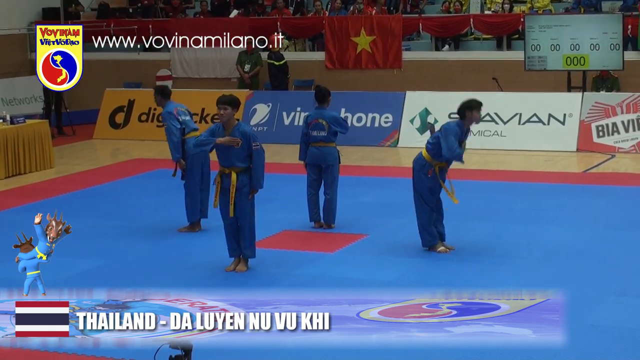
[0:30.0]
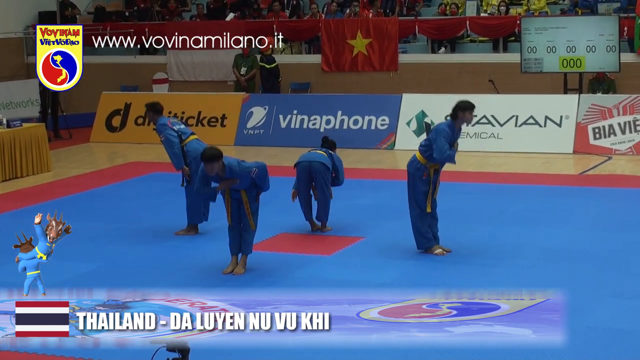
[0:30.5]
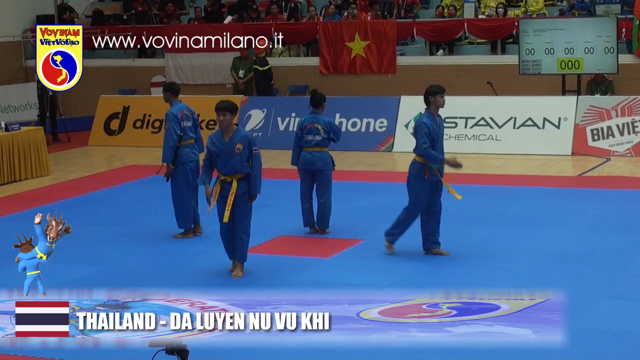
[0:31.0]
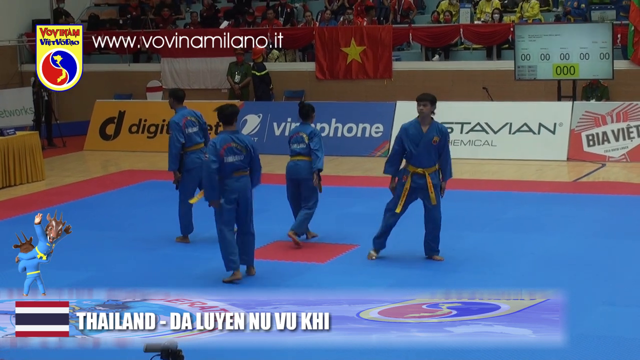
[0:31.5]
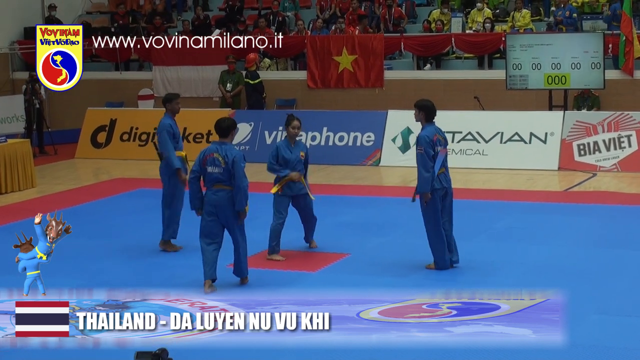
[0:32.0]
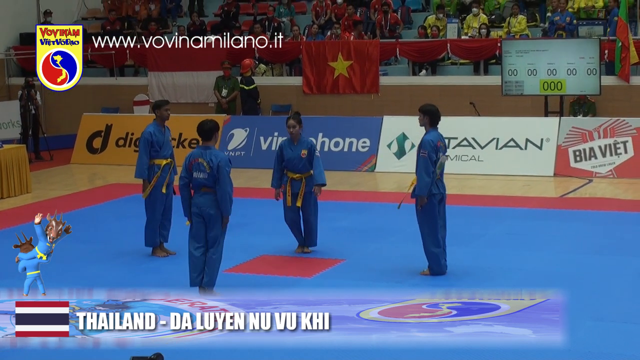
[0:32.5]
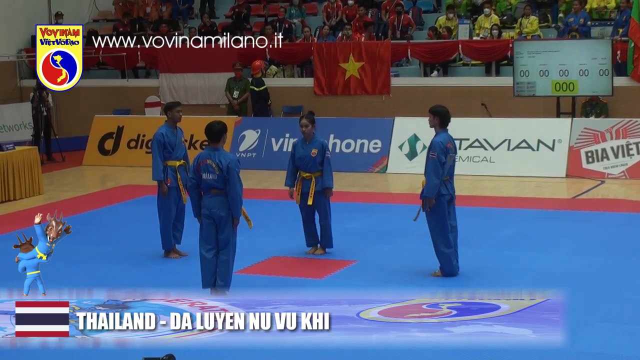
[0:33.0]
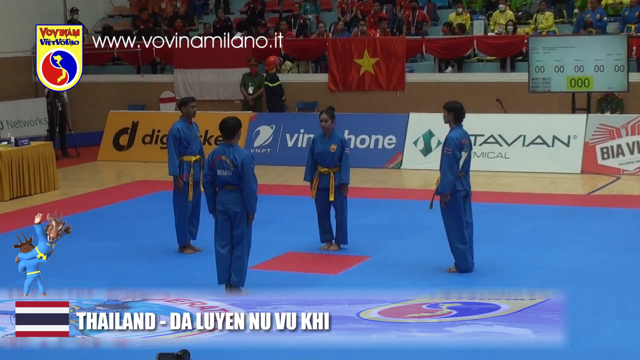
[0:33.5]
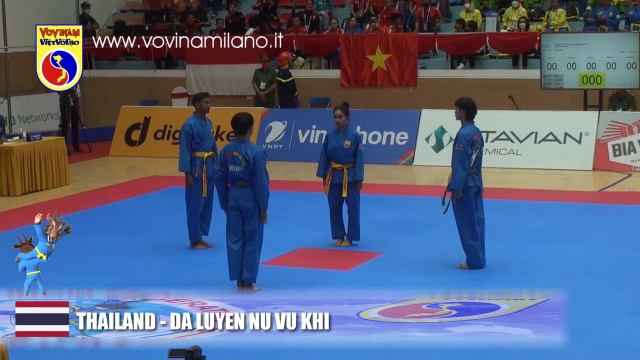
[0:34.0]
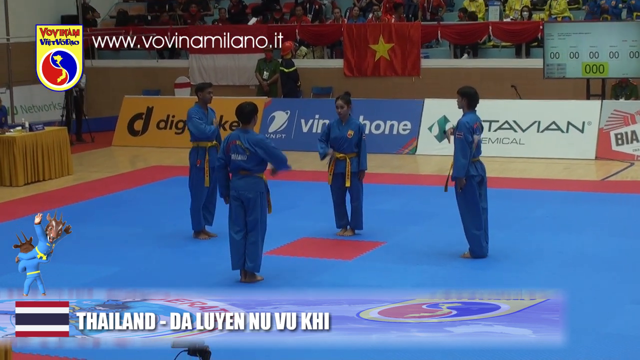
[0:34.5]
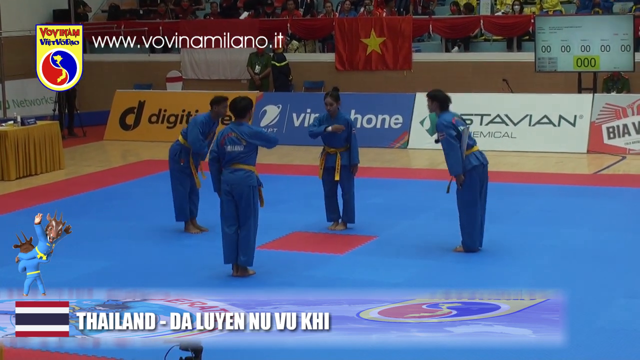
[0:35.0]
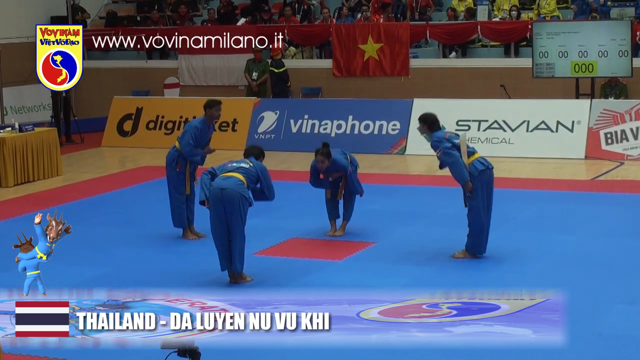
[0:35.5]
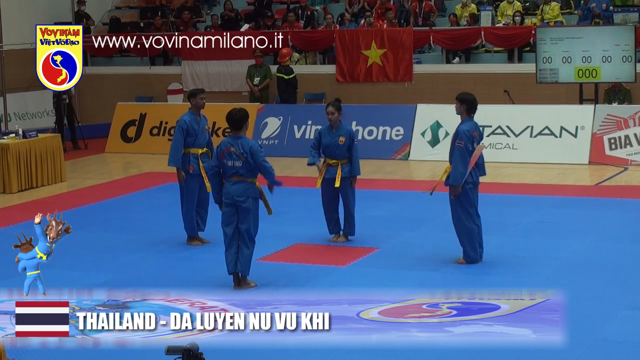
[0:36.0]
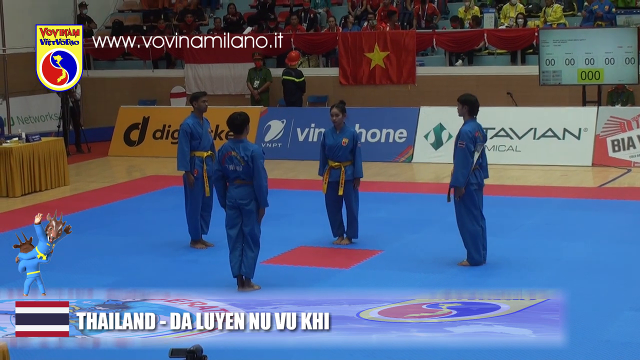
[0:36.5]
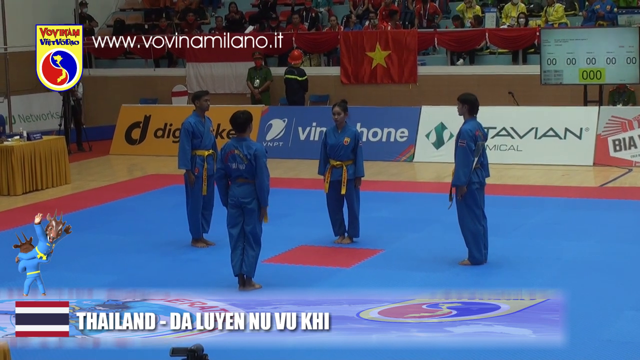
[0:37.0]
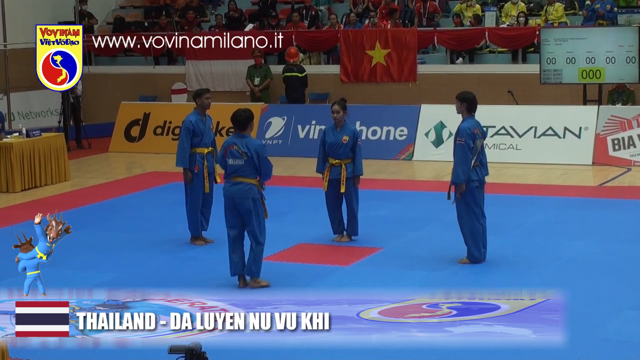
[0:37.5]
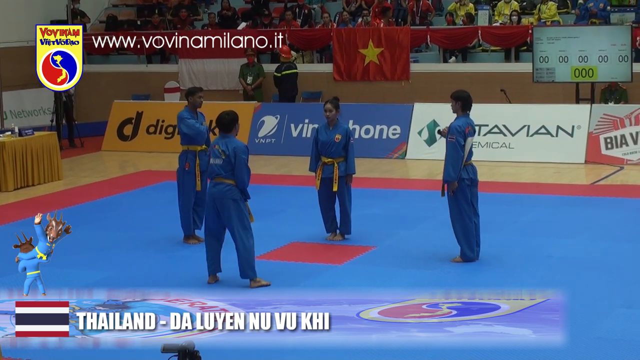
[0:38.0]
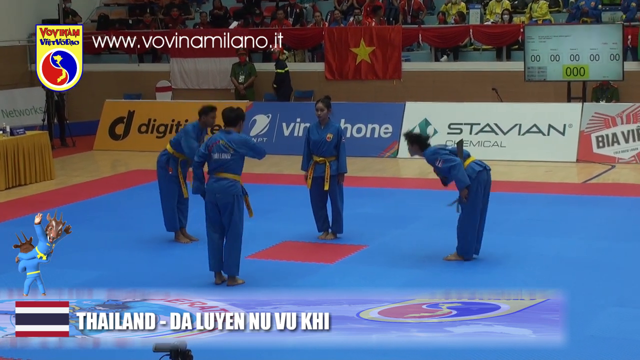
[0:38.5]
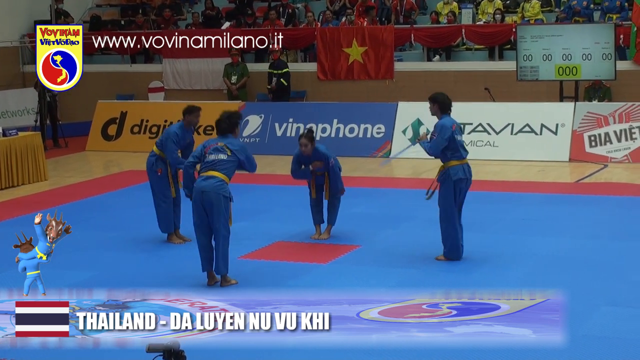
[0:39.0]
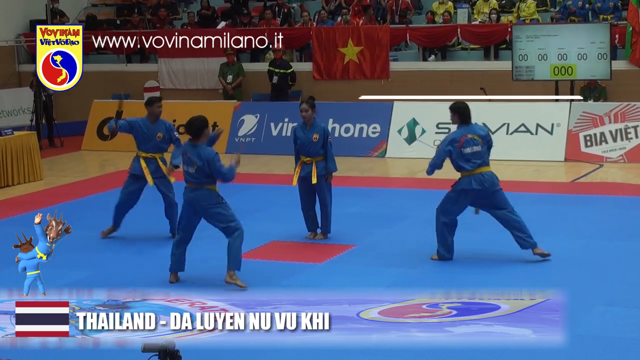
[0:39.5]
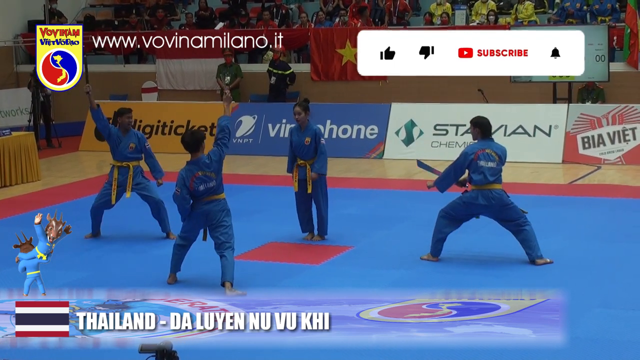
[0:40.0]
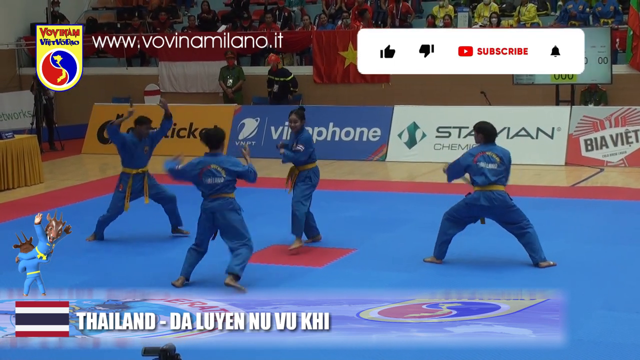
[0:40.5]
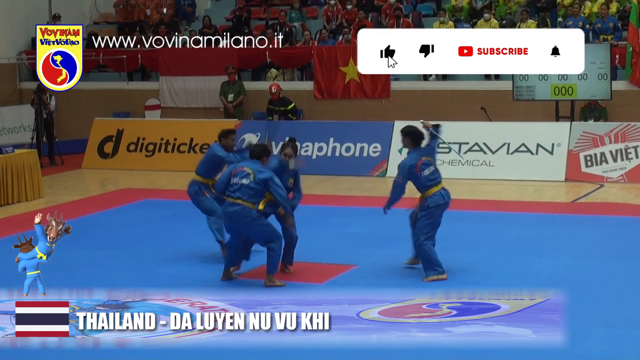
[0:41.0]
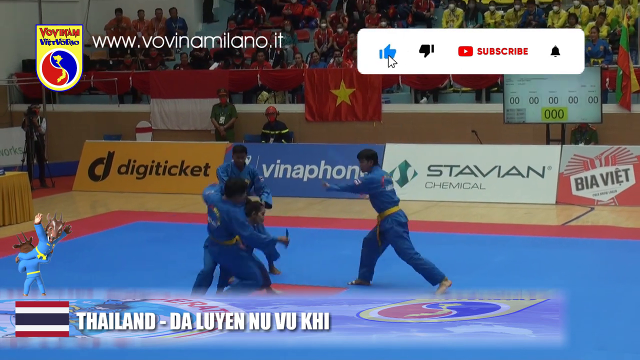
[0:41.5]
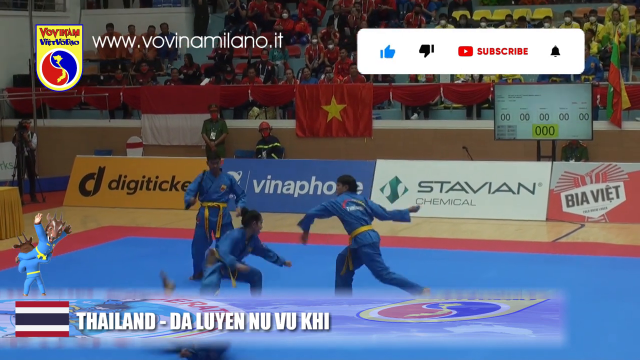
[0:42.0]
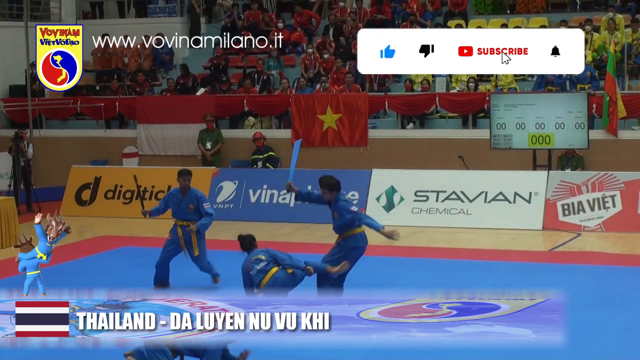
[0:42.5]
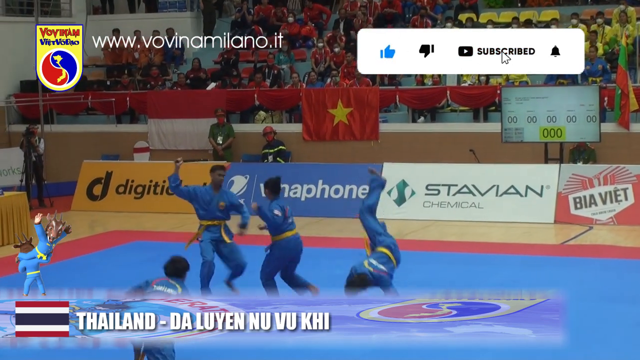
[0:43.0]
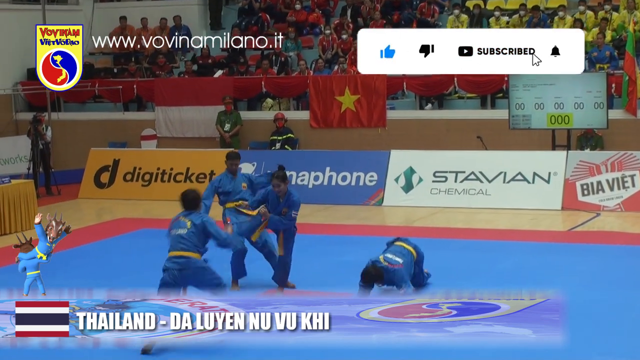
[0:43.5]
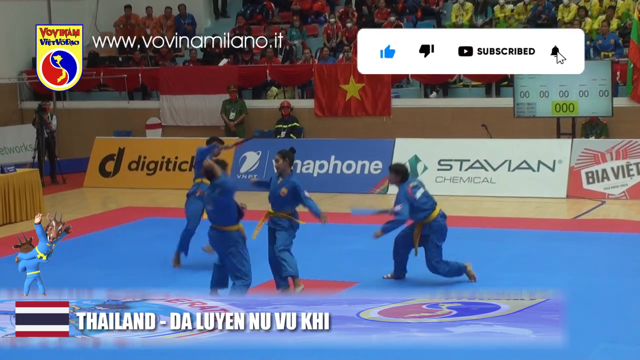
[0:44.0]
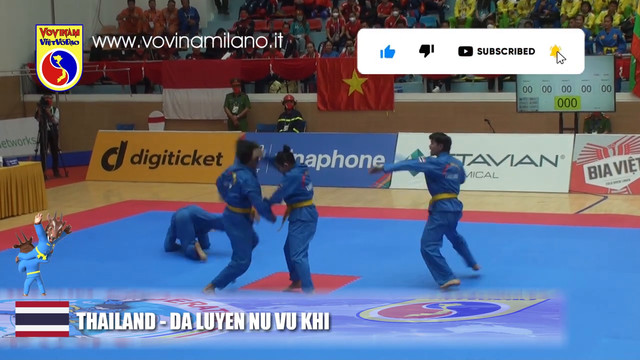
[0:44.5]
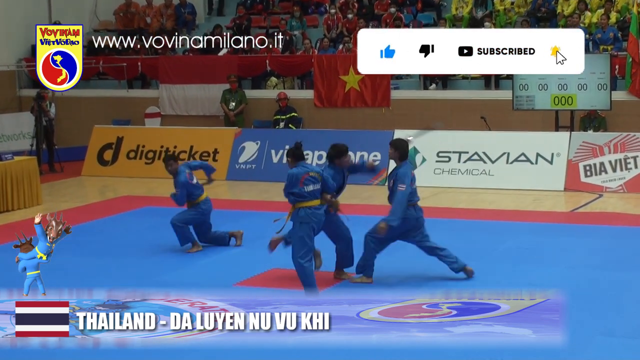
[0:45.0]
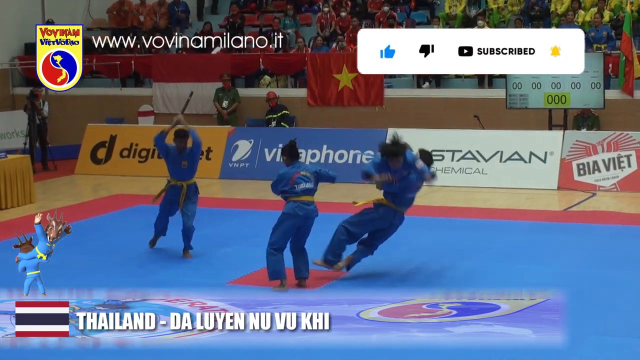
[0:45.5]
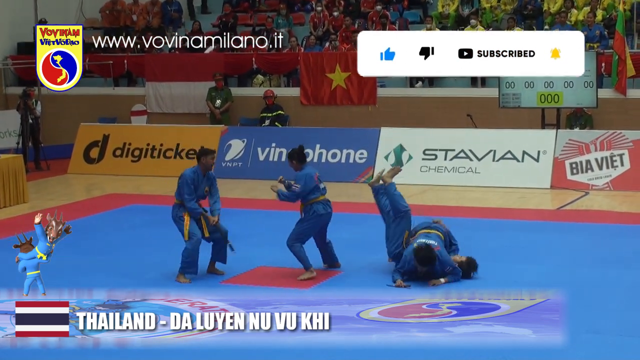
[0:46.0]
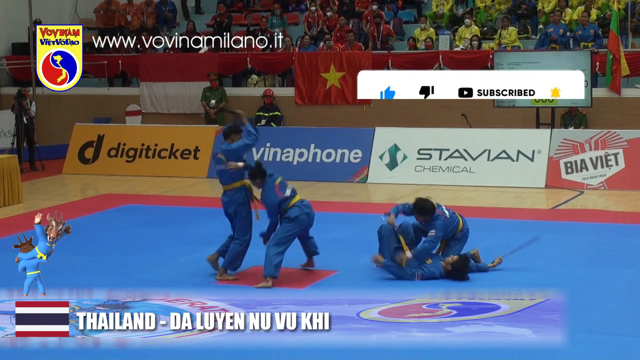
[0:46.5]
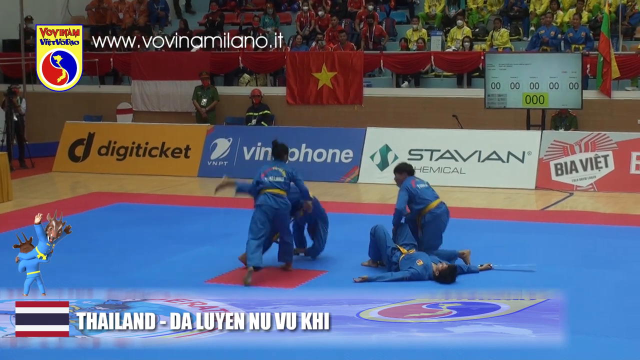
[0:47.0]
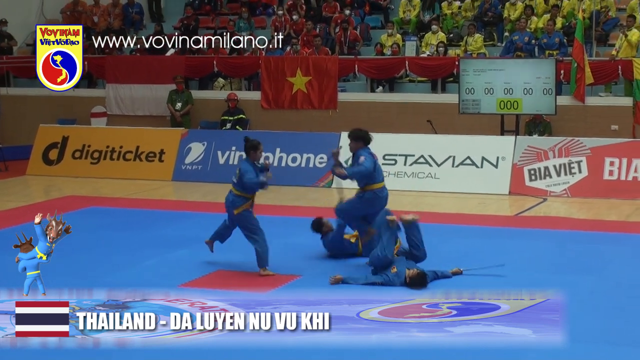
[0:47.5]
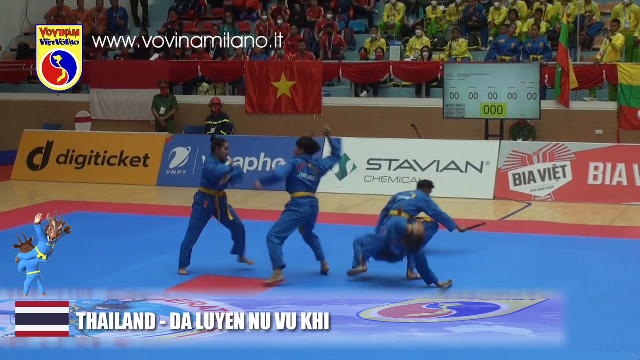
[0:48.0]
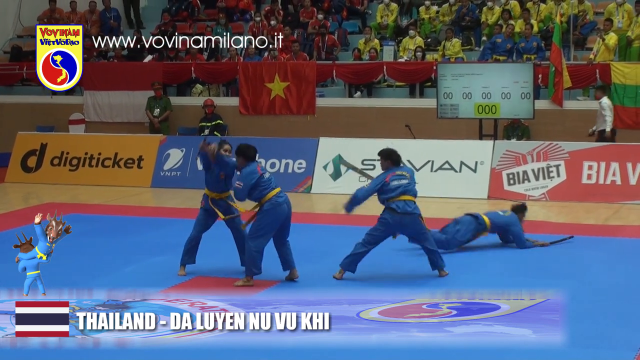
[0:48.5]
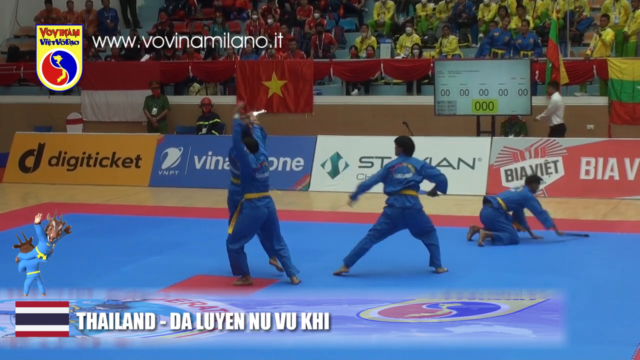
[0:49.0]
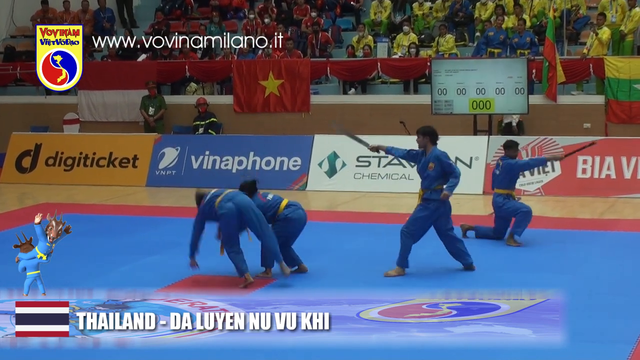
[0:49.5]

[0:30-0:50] A team of four Thai nationals wears blue karate-style uniforms tied with yellow sashes. The four members face away from each other, one each in the north, south, east and west positions, and bow to address the audience in the stands above the competition area, a blue mat with a red square in the centre. They then turn towards each other, bow with a hand to their chest, and take a bow. The three men in the team wield swords and sabers and try to attack the female team member, whose hair is up in a bun. She performs martial arts to block their attacks, throwing them onto the floor, grabbing them by the wrist and flipping a would-be attacker onto the blue mat.